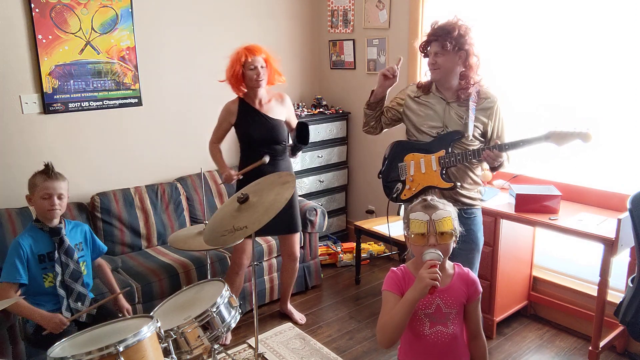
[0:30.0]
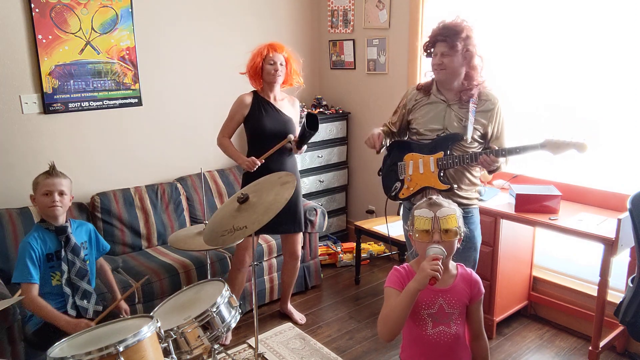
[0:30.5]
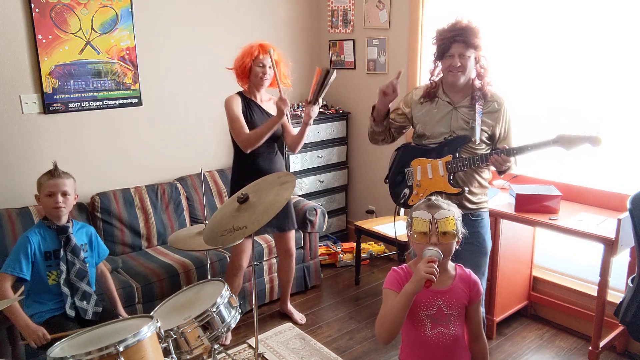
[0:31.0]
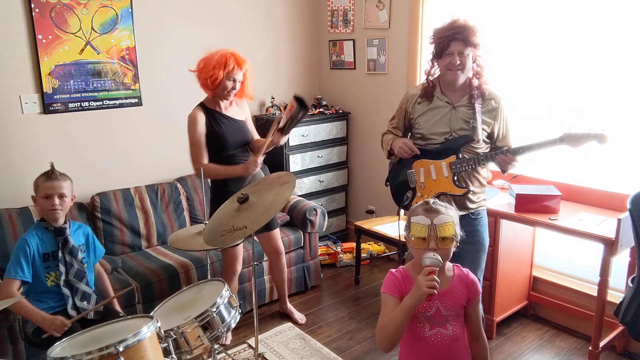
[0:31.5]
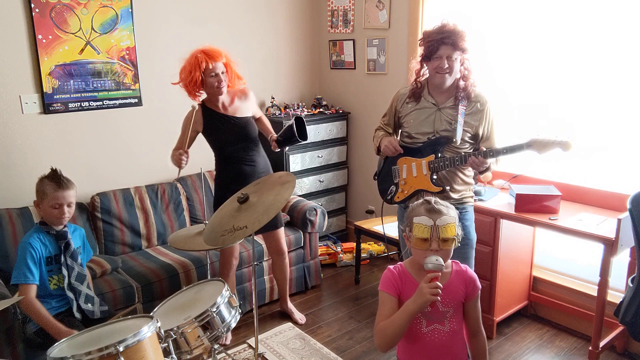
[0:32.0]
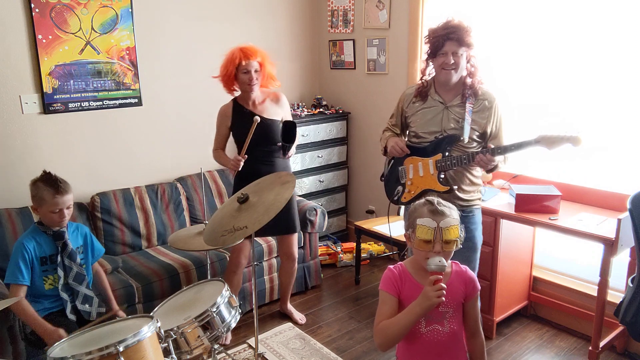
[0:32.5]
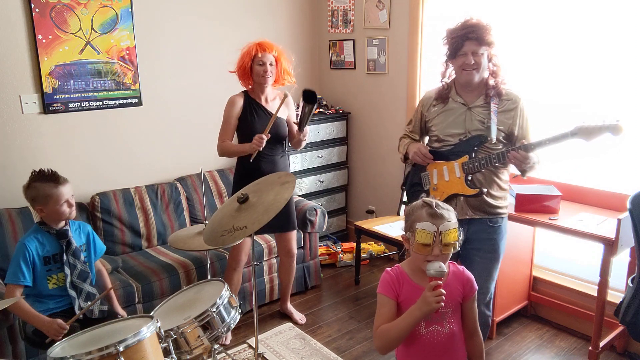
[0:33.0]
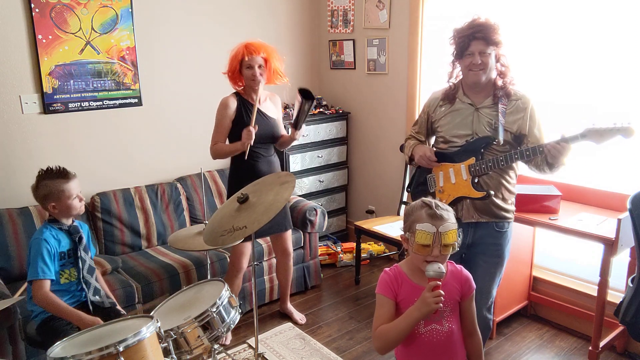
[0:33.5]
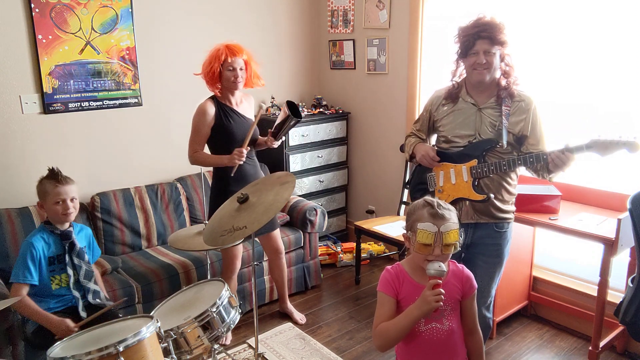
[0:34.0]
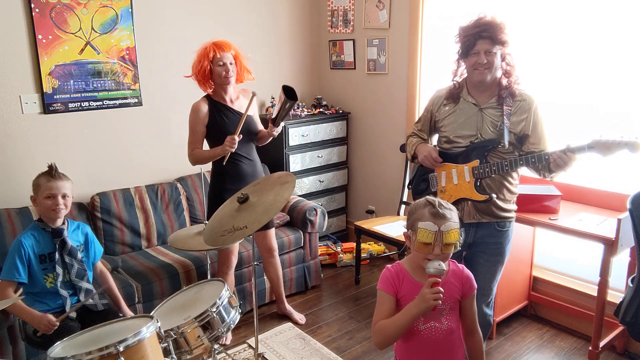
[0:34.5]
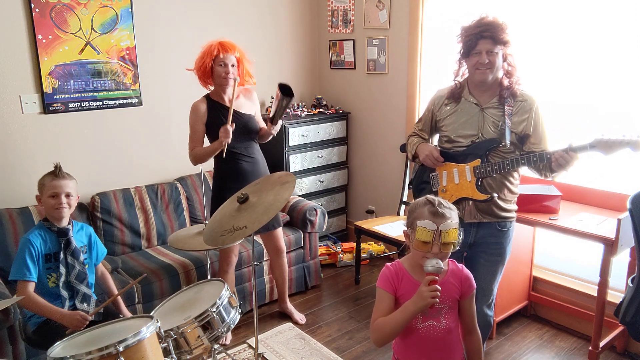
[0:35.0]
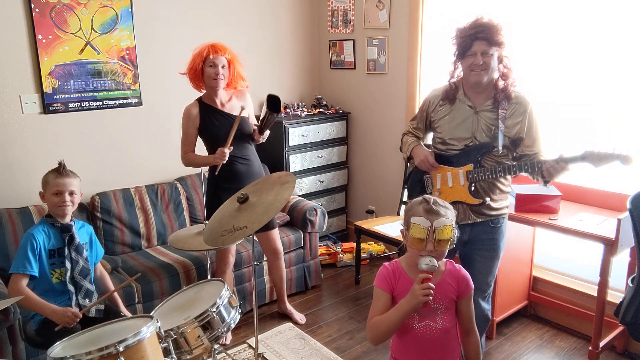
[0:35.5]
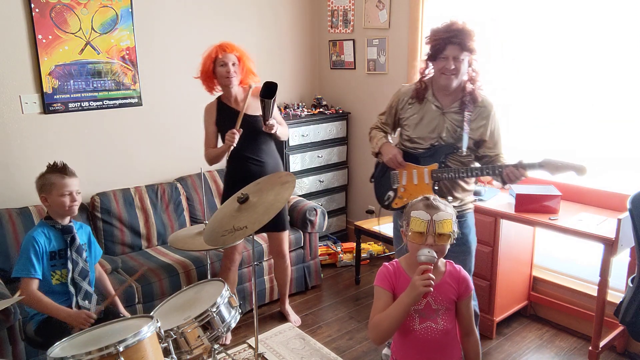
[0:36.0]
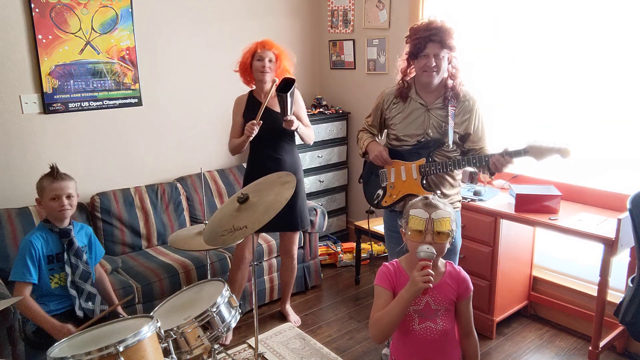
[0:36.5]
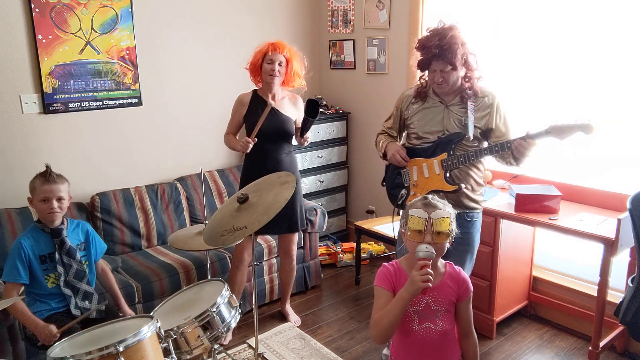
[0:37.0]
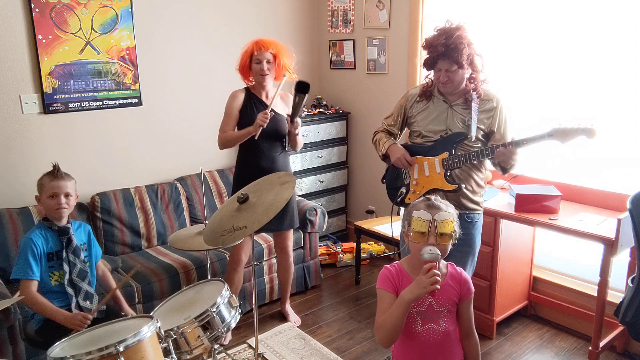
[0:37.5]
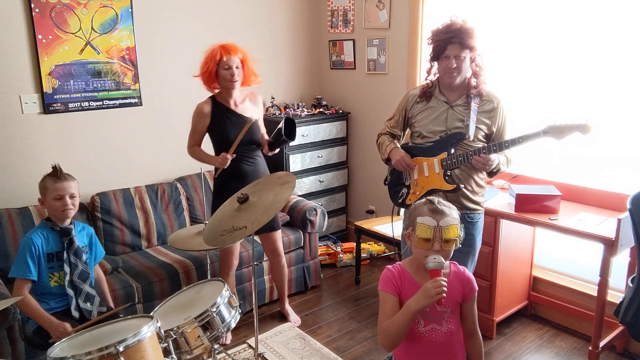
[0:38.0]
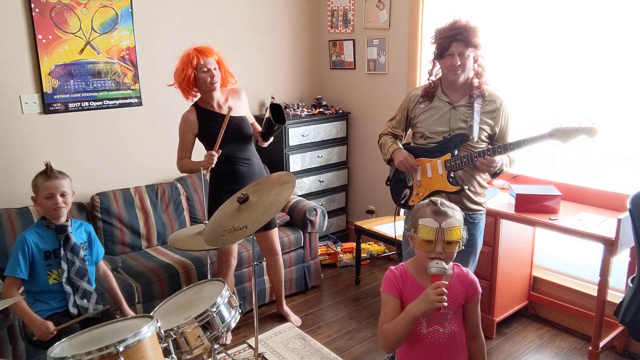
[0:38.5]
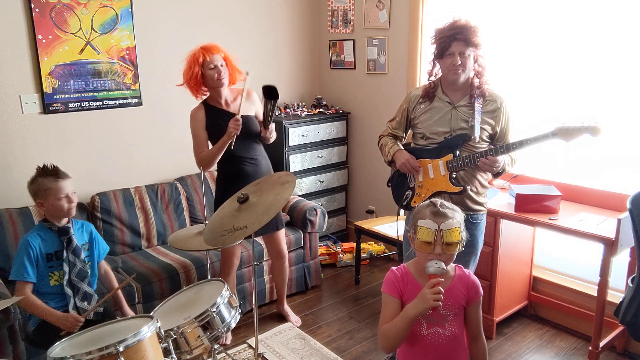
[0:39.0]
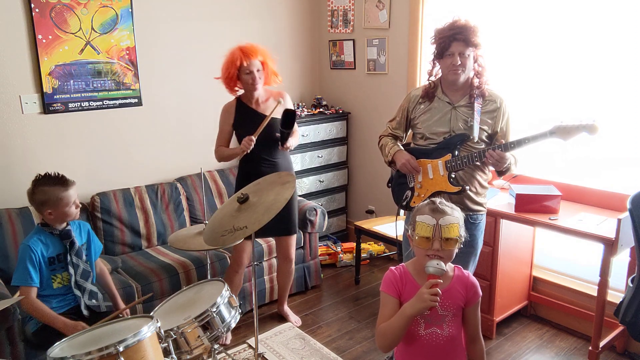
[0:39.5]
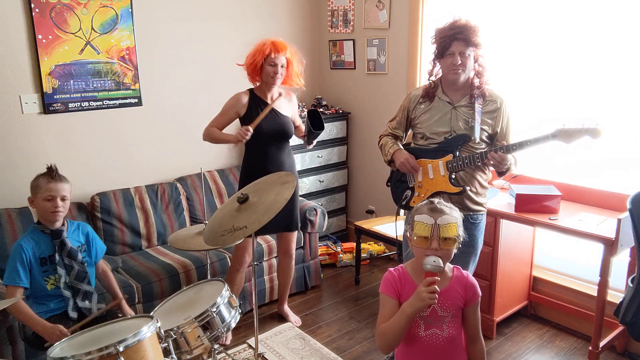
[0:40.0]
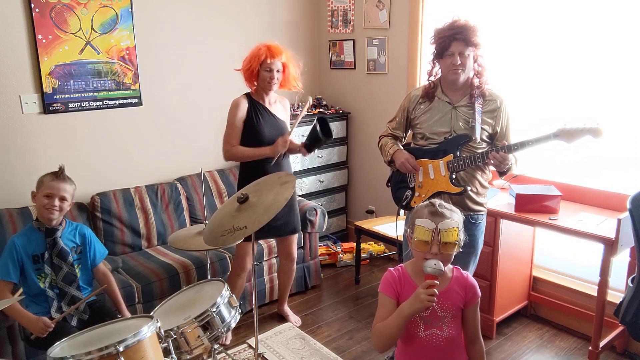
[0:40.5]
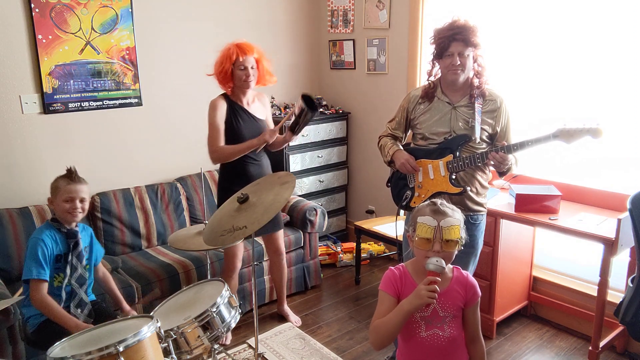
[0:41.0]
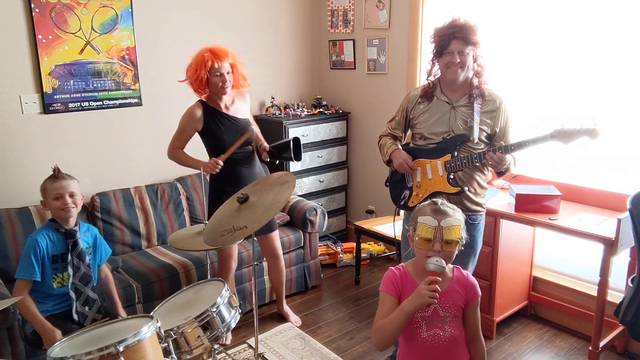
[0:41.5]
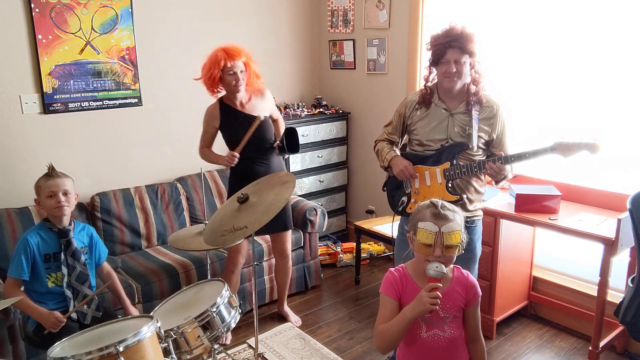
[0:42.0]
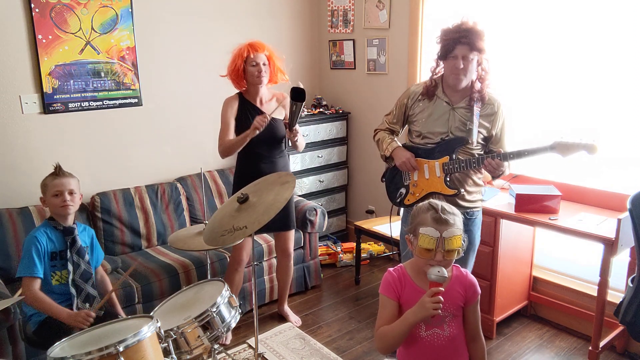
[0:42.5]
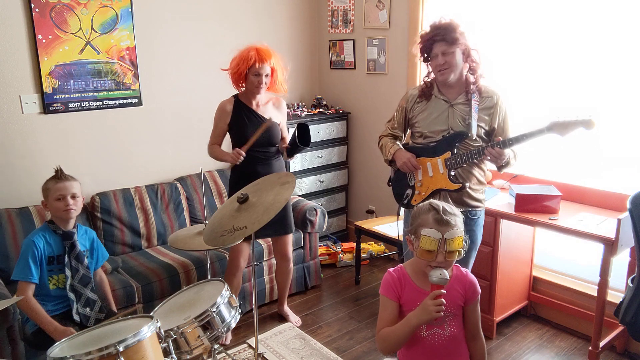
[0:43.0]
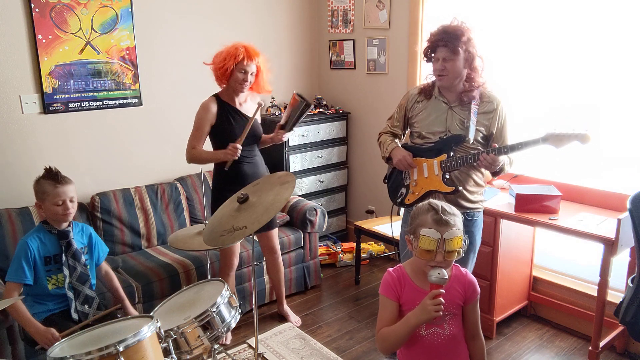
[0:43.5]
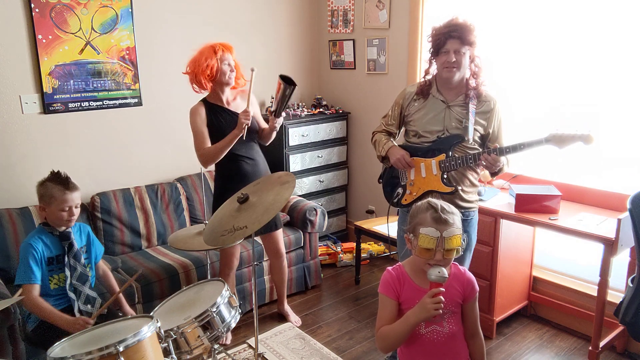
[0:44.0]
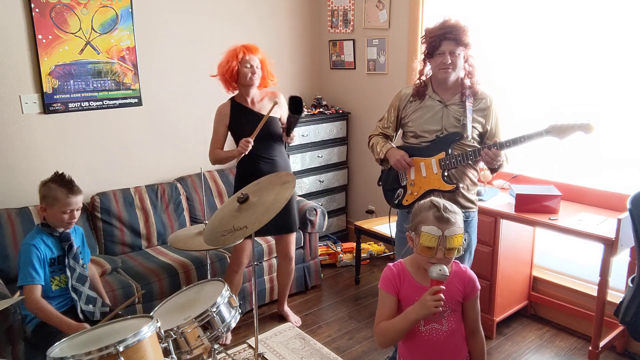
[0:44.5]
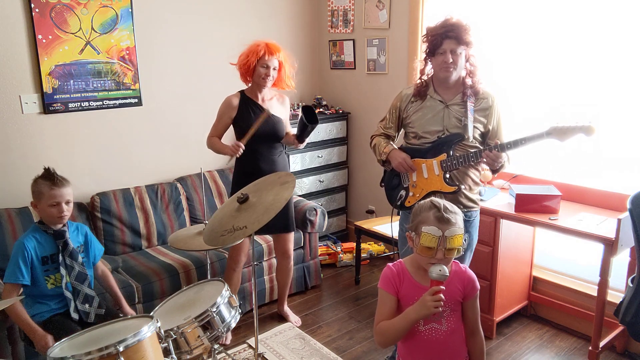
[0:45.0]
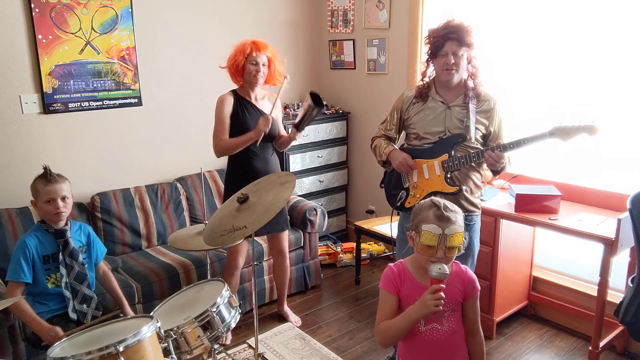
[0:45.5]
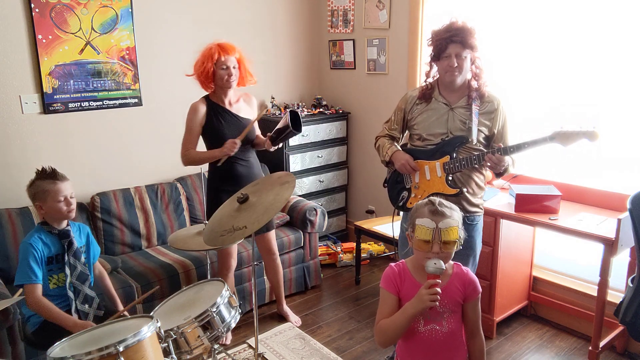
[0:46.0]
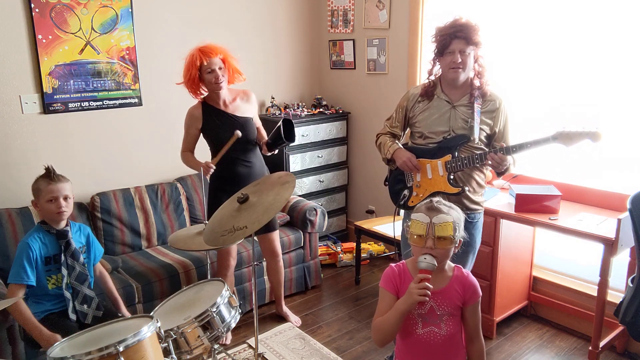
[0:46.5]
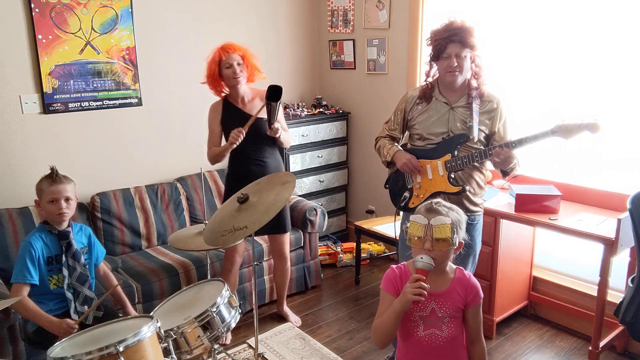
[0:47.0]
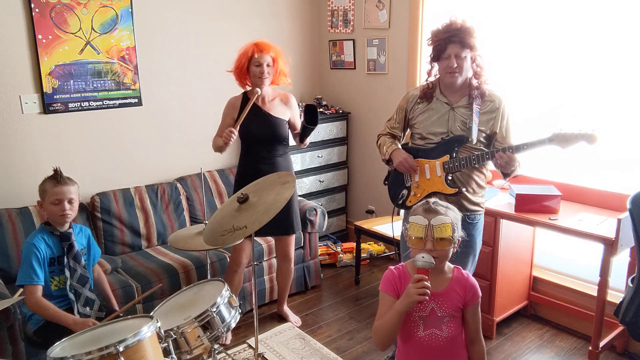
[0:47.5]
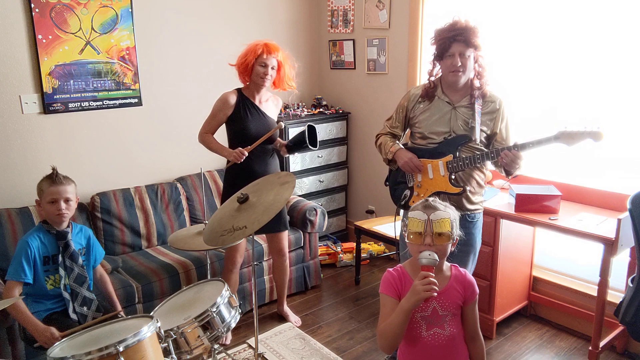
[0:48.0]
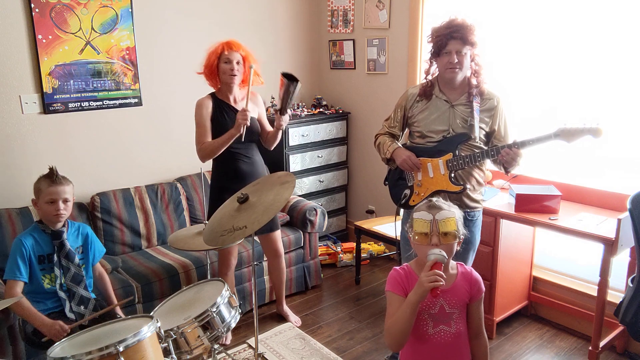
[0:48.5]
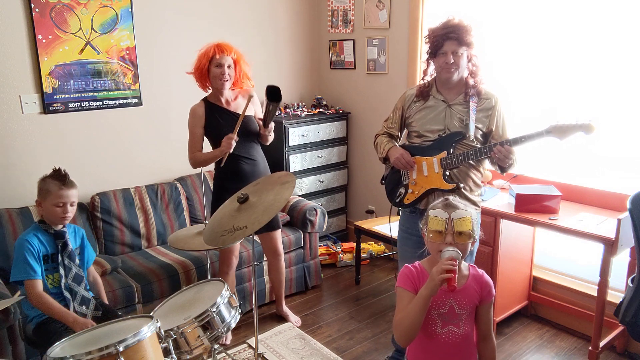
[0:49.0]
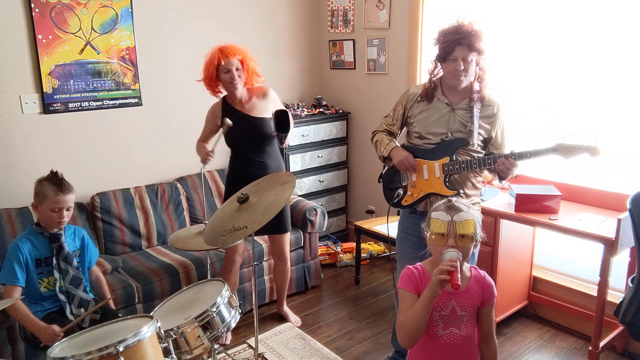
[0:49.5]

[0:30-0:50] The family keeps performing. The mom dances a bit more, and they look at what is apparently the camera, or maybe a karaoke screen. The brother starts smiling as he hits the drum. The girl sings with the microphone so close to her mouth that her mouth cannot be seen moving. The wall and the room behind them are beige. A framed painting shows tennis rackets in what looks like a stadium, with a range of rainbow colors behind the rackets: orange with red in the upper left corner, yellow in the middle, and sky blue. There is no purple at the top, only a slightly purplish tint at the bottom left.